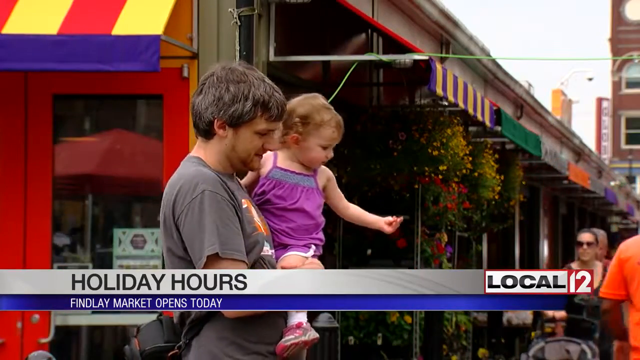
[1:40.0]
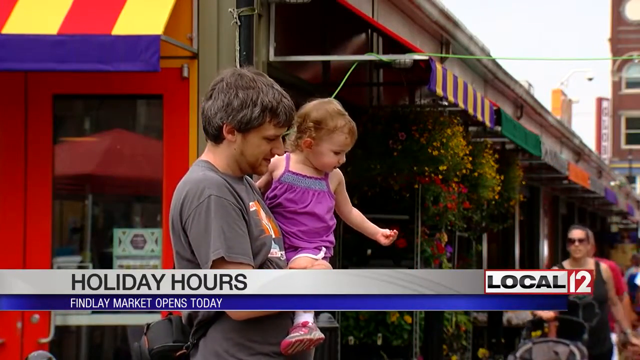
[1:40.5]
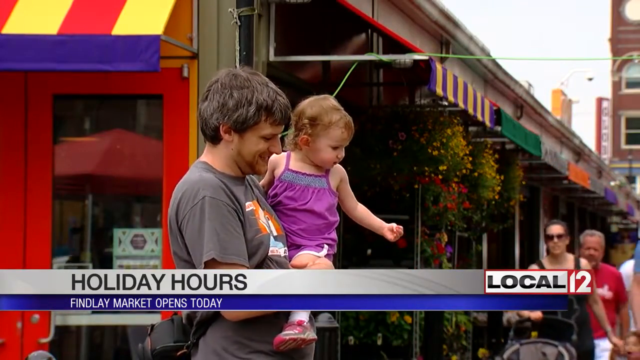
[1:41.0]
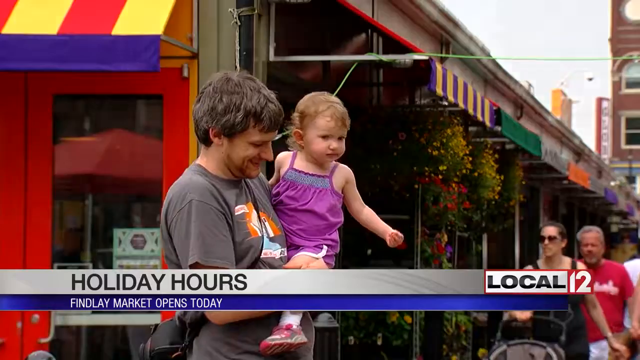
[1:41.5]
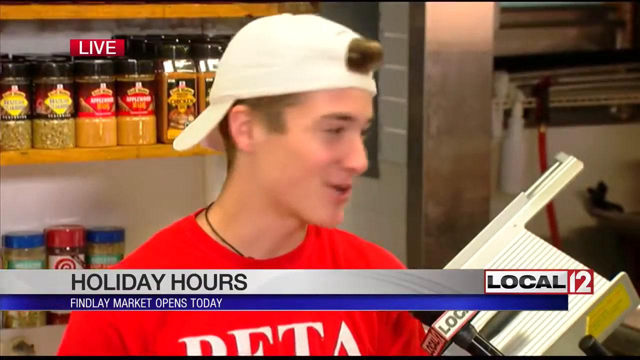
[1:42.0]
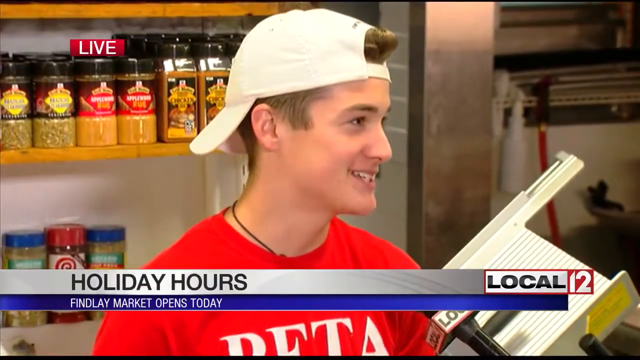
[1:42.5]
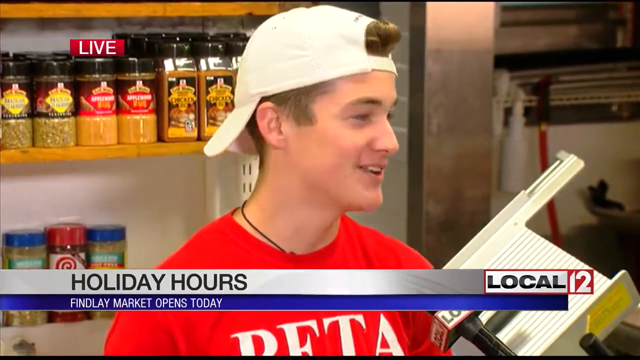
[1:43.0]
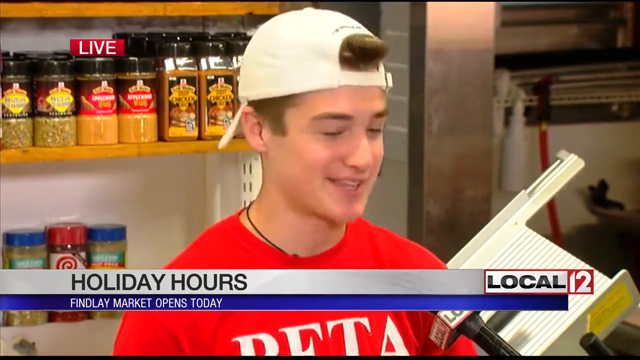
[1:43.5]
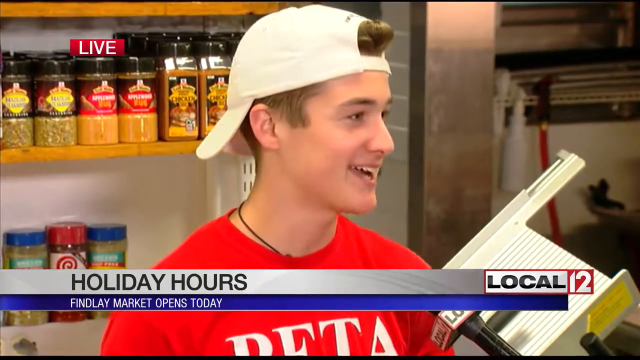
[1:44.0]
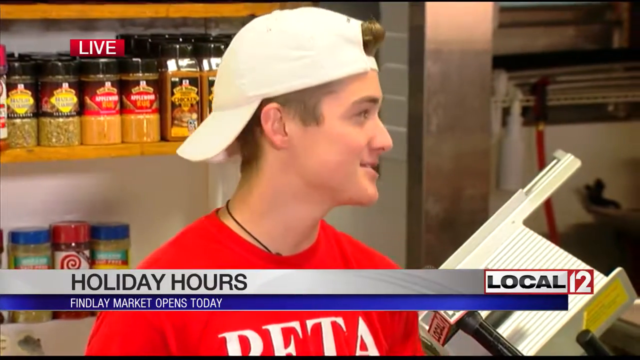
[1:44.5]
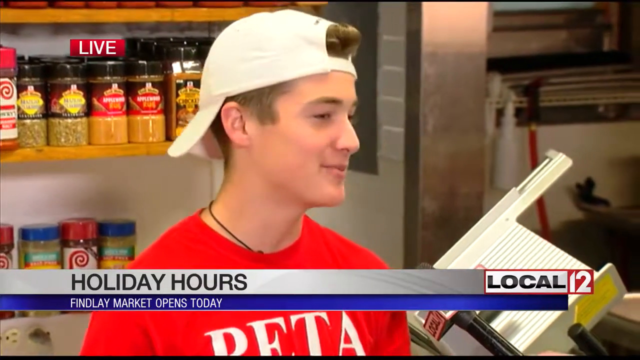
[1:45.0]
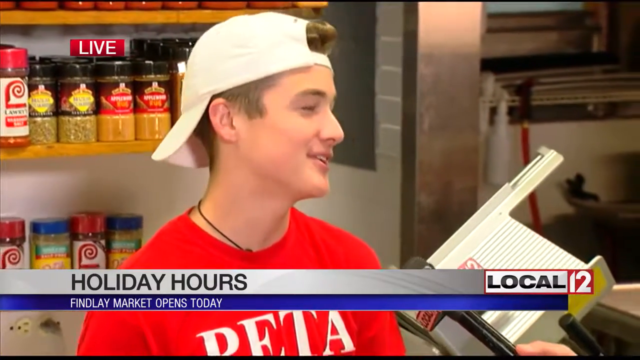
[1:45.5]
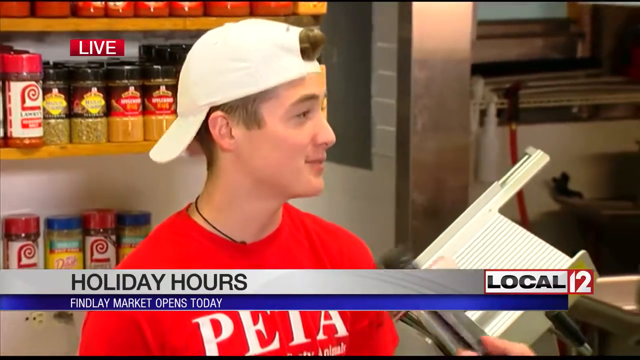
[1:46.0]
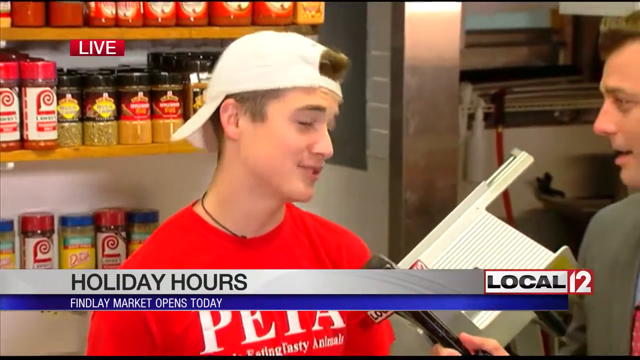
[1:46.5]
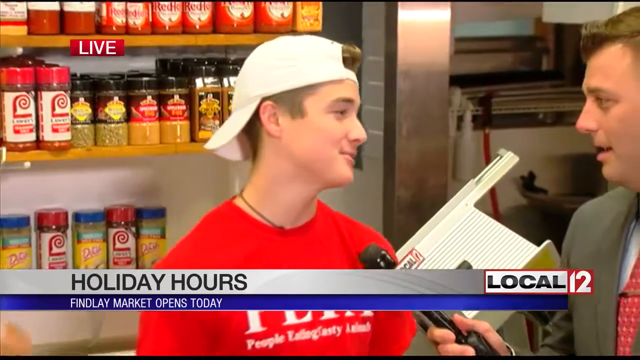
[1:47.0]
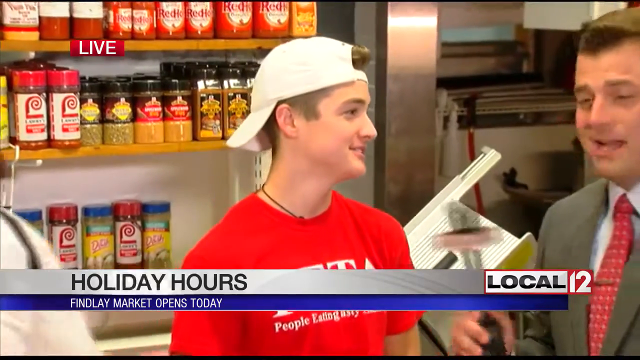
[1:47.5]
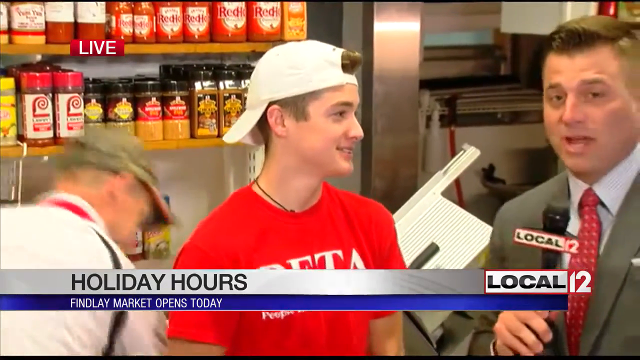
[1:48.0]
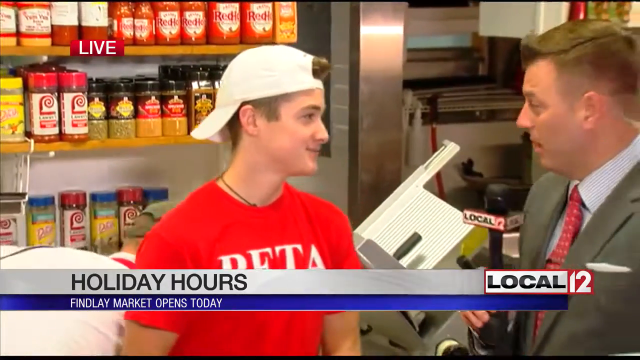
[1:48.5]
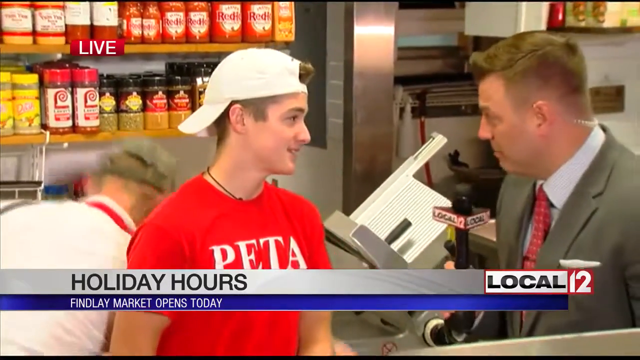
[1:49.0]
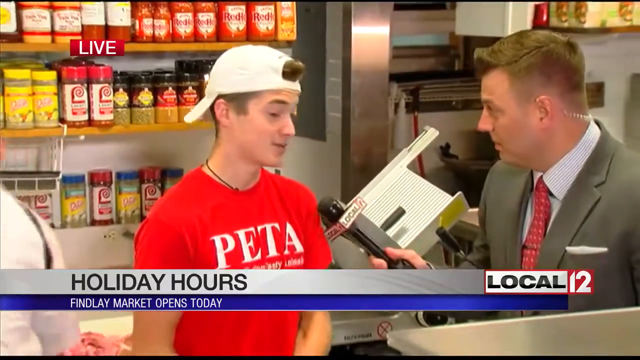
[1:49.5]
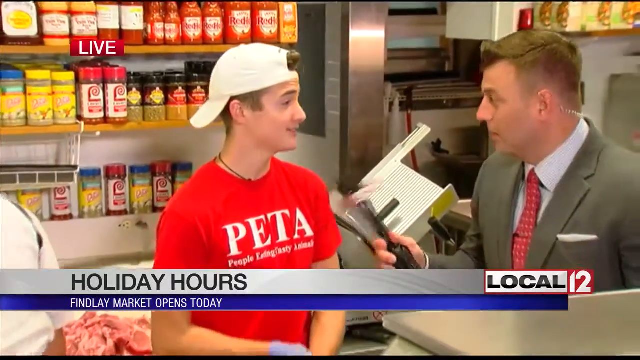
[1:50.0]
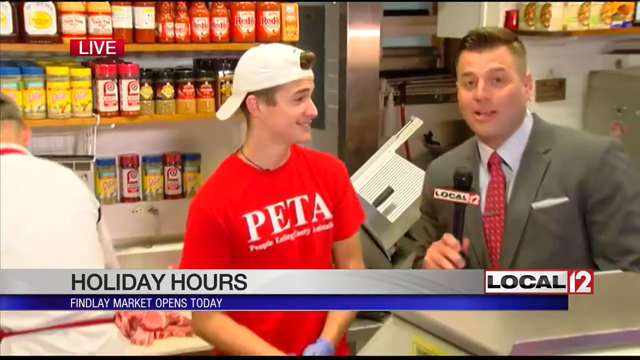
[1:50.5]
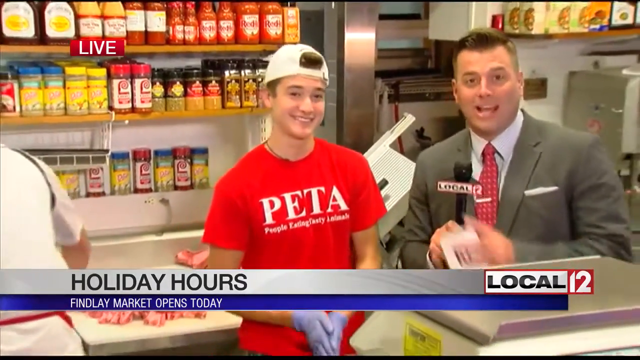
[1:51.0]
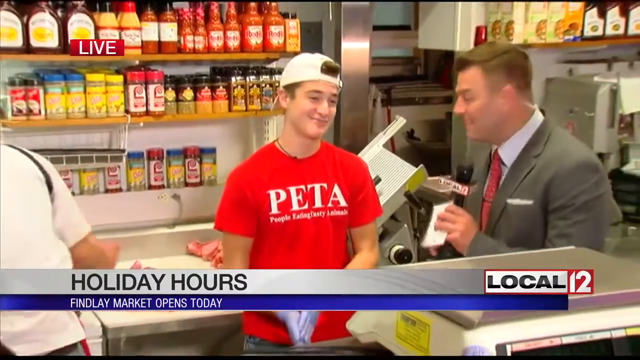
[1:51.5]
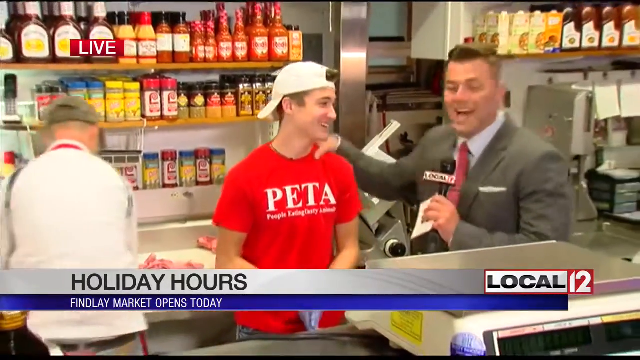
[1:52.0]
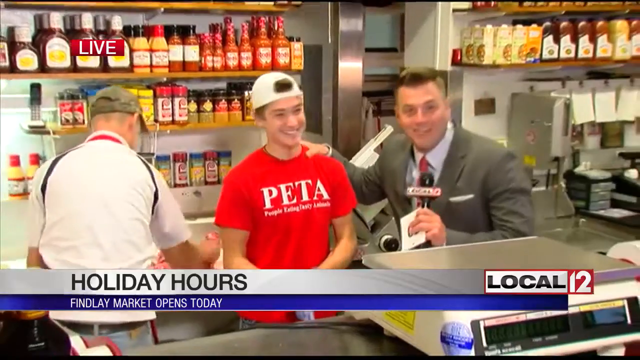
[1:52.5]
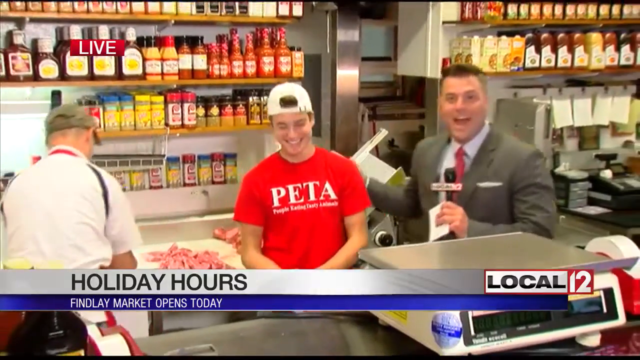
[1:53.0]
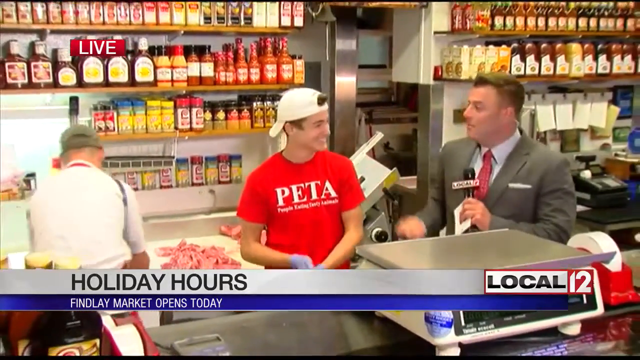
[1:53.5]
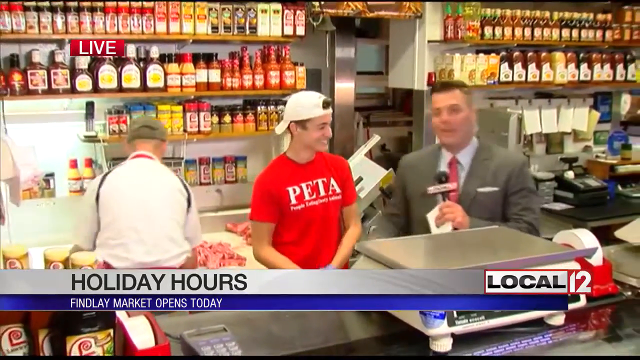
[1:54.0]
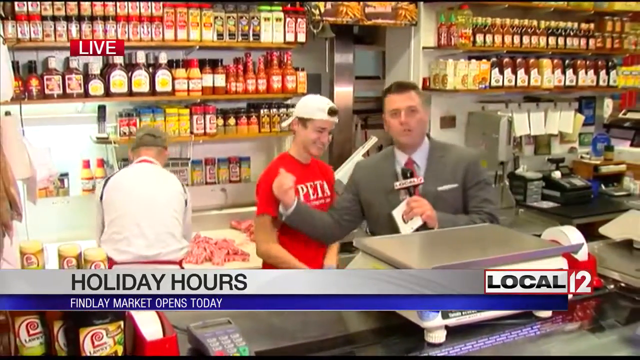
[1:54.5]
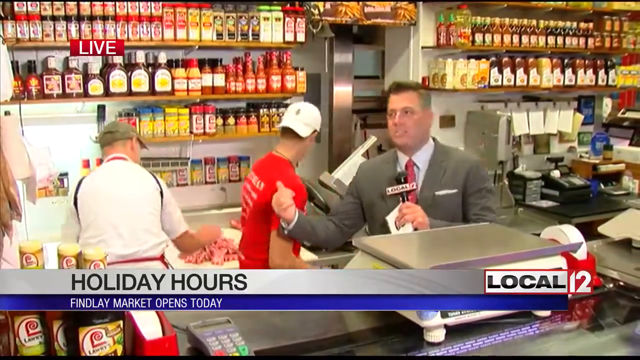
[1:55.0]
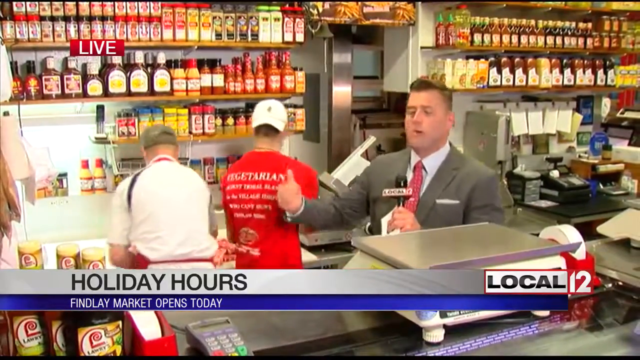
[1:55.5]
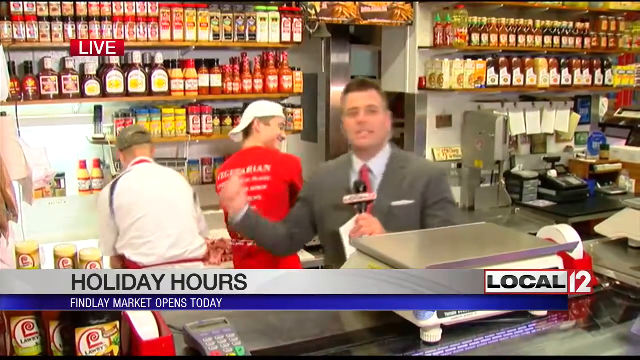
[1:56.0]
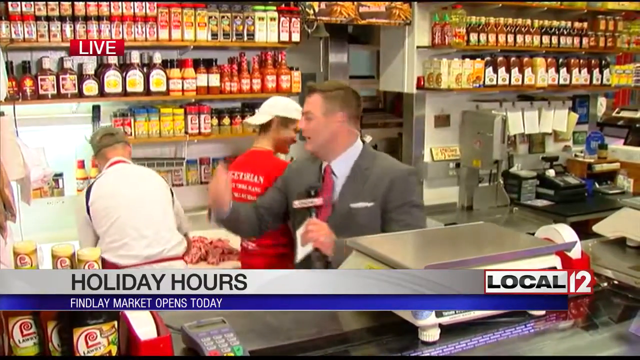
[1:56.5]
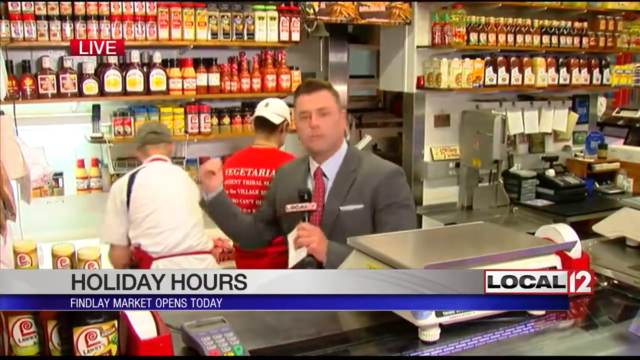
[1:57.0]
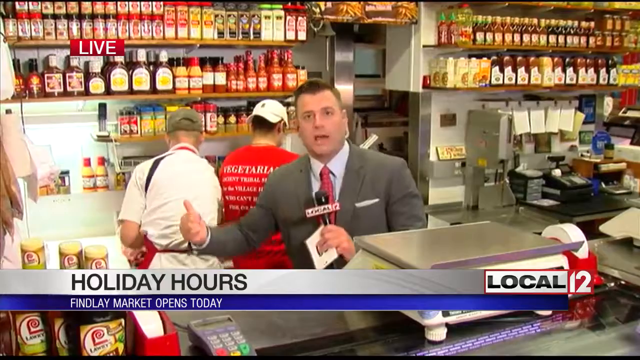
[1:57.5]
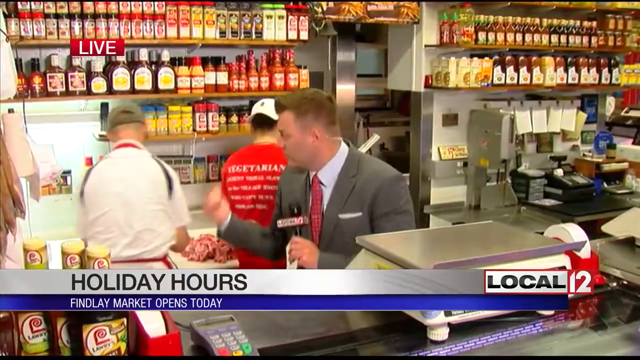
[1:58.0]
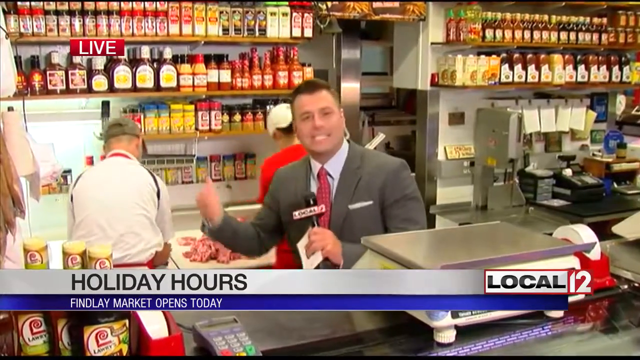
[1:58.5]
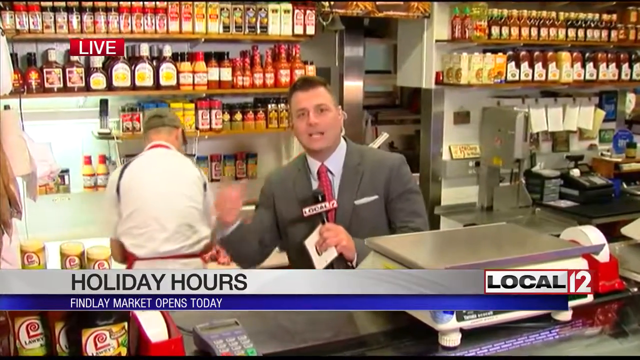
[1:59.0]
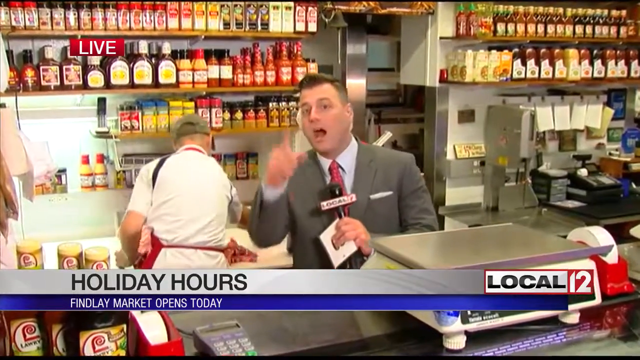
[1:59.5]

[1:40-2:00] The man who looks like a father holds his child; the child wears a purple shirt and the man wears a gray shirt. The next shot shows the young deli worker in the white backwards hat and red shirt, who speaks while looking at the news reporter holding the microphone in front of him; he looks fairly happy and smiles. The anchor takes the mic back briefly to say something, then returns it to the young man, who speaks again. The anchor takes the microphone back, and both look at the camera and speak, the young man smiling and the anchor smiling as he talks. The anchor moves the microphone to his left hand, puts his right hand on the young man's shoulder and pats it while the young man smiles. The young man turns back around and resumes working while the anchor points his right thumb at him and at the father, moving his thumb up and down, most likely talking about them. He looks back at them and at the camera a few times, then points at the camera while speaking, sort of raising his eyebrows.